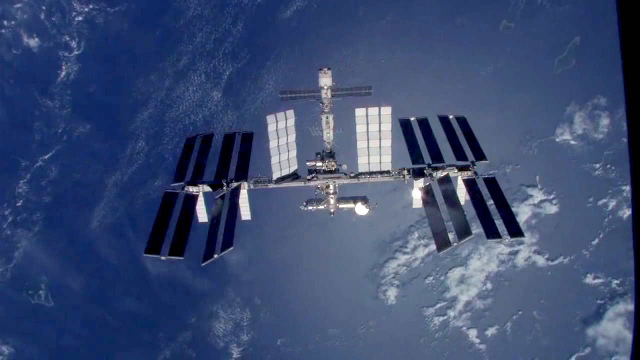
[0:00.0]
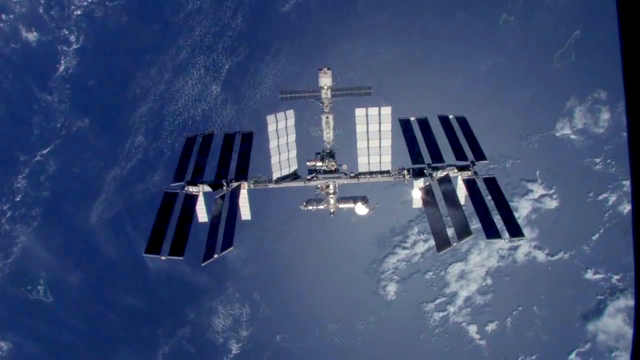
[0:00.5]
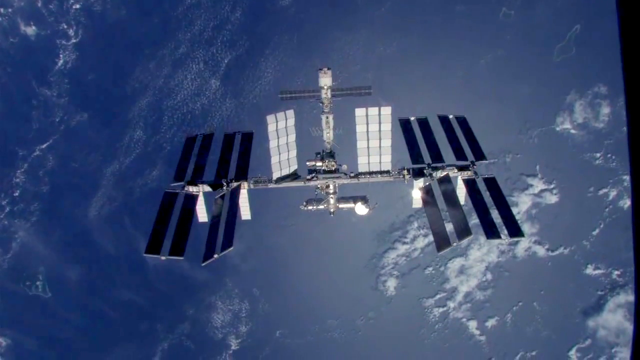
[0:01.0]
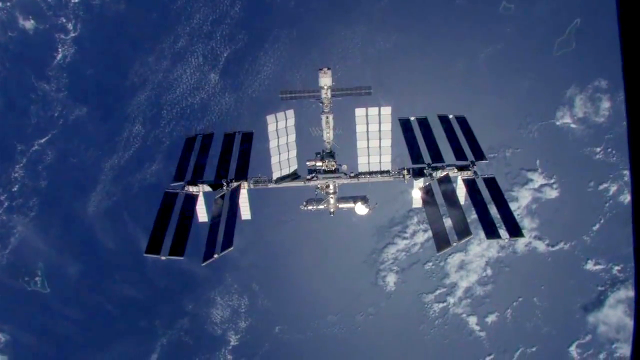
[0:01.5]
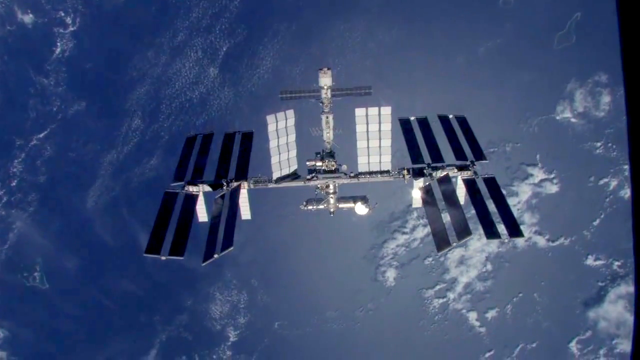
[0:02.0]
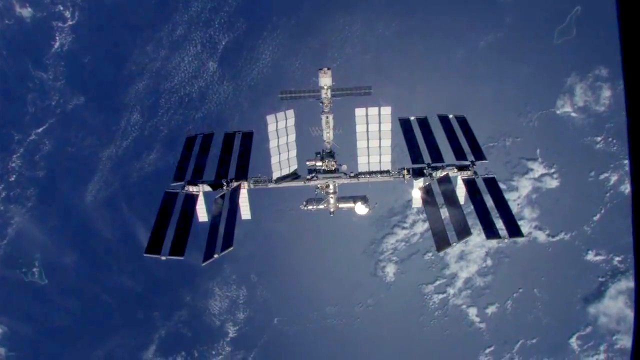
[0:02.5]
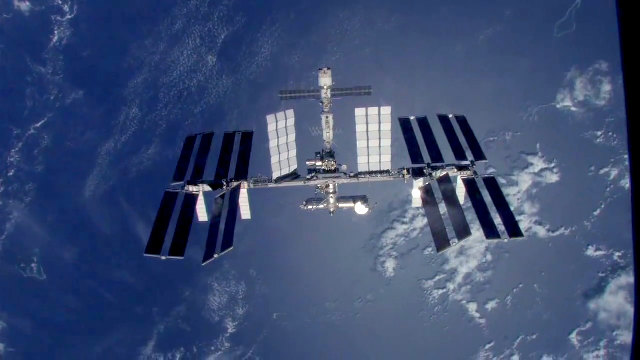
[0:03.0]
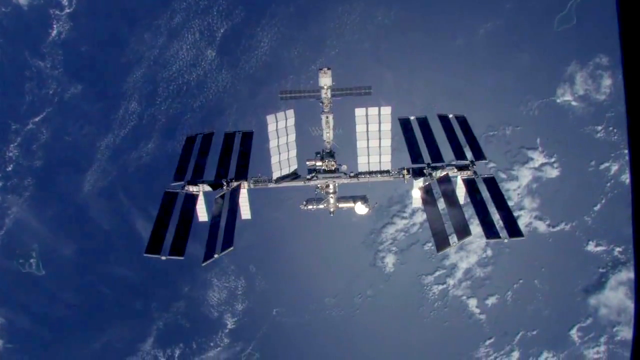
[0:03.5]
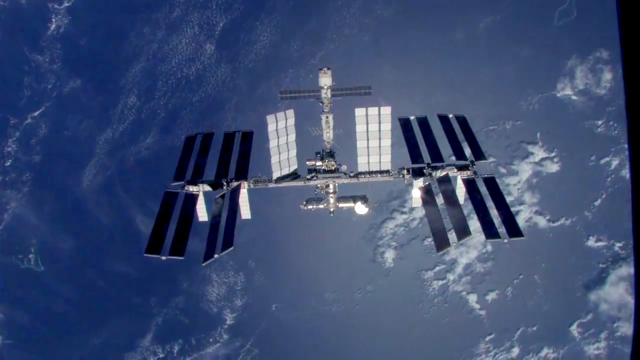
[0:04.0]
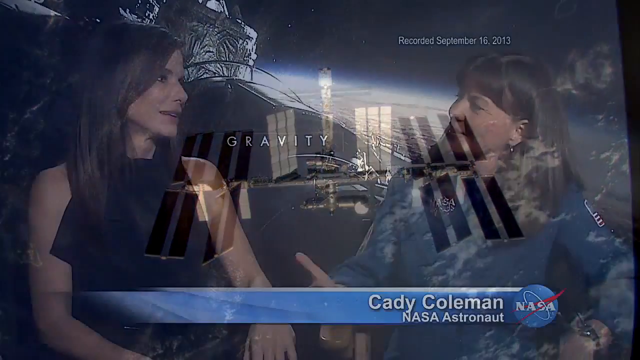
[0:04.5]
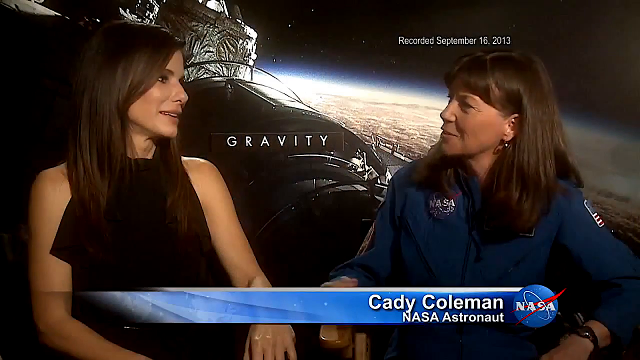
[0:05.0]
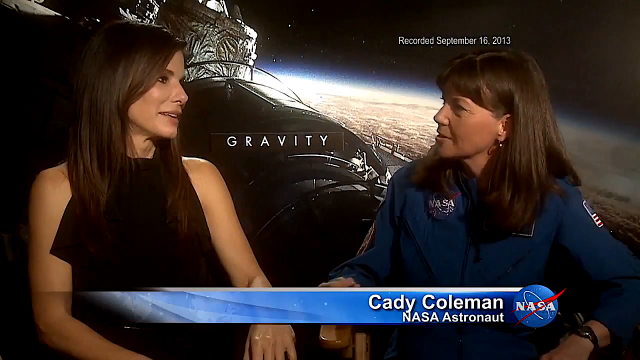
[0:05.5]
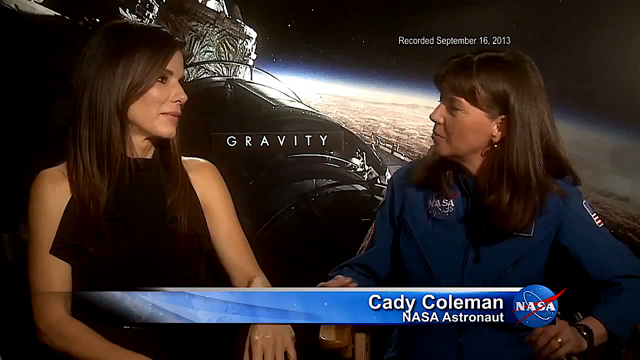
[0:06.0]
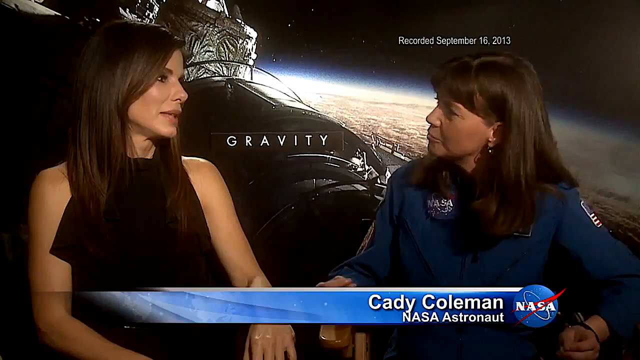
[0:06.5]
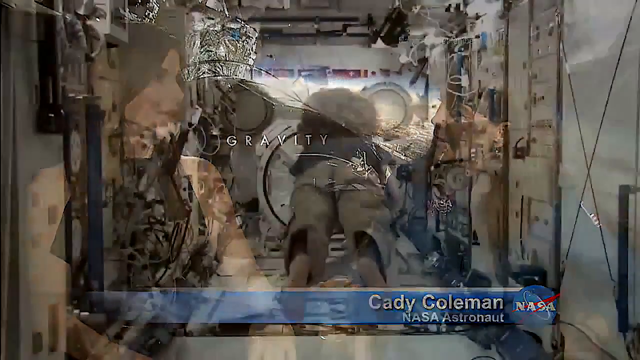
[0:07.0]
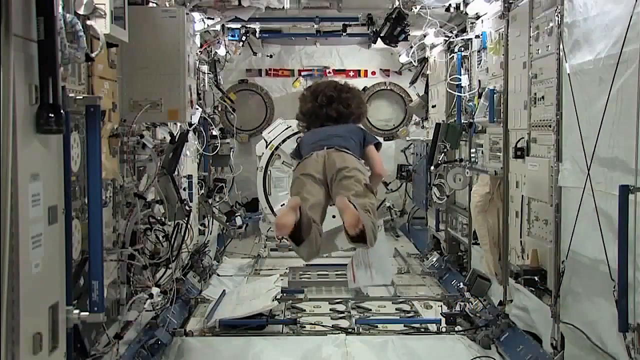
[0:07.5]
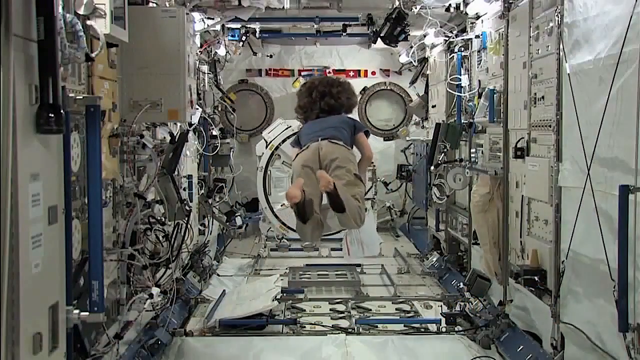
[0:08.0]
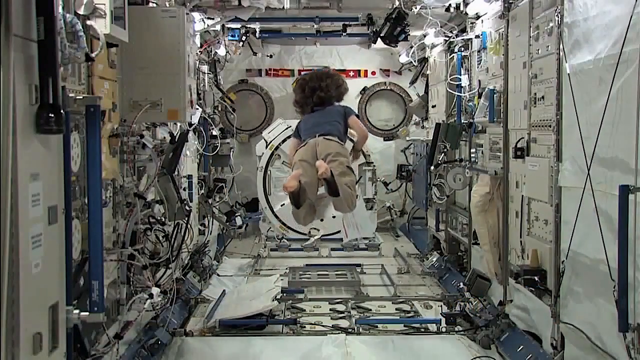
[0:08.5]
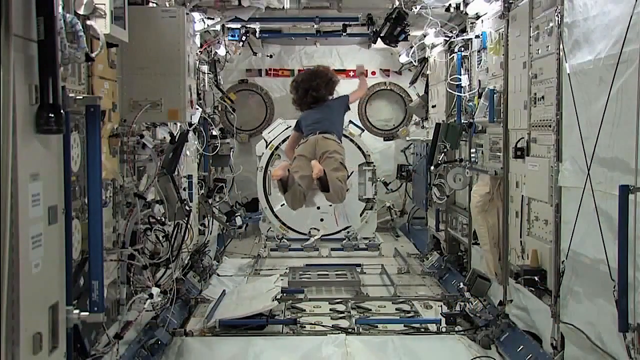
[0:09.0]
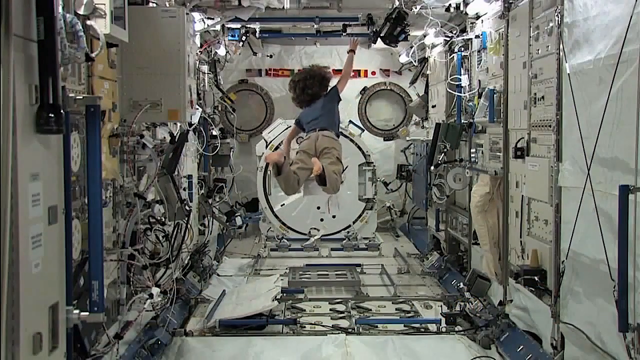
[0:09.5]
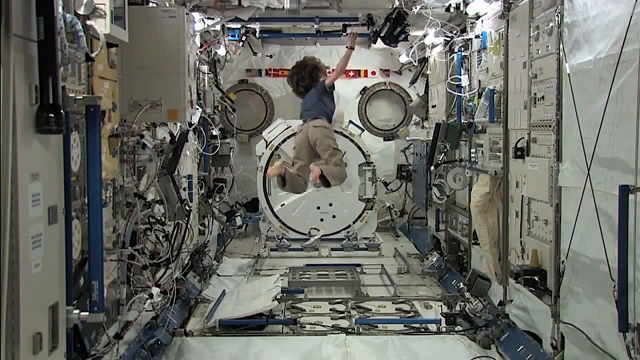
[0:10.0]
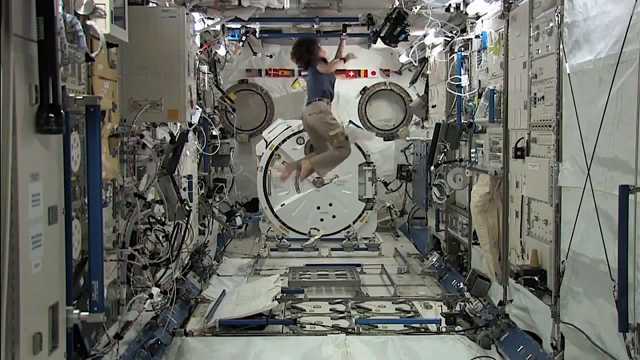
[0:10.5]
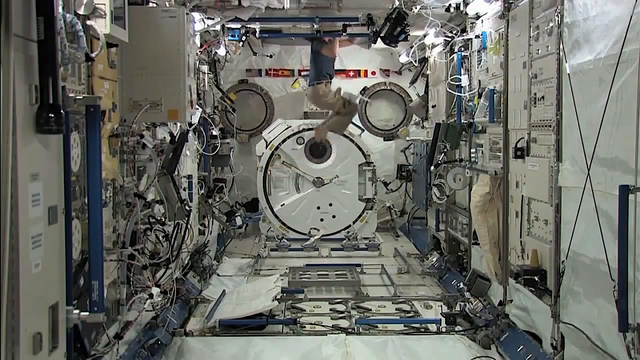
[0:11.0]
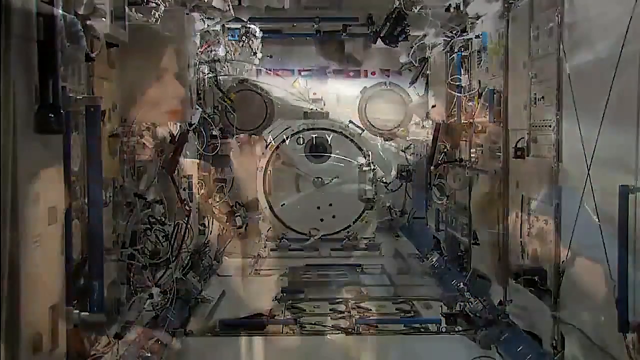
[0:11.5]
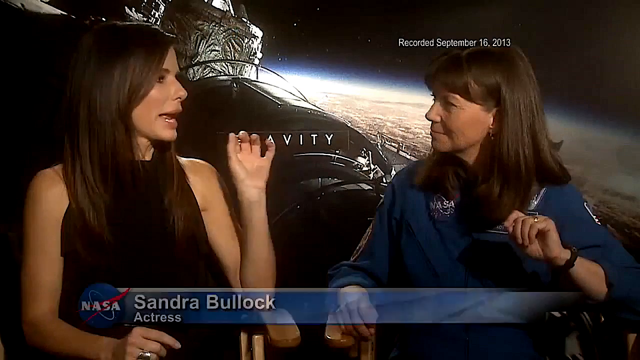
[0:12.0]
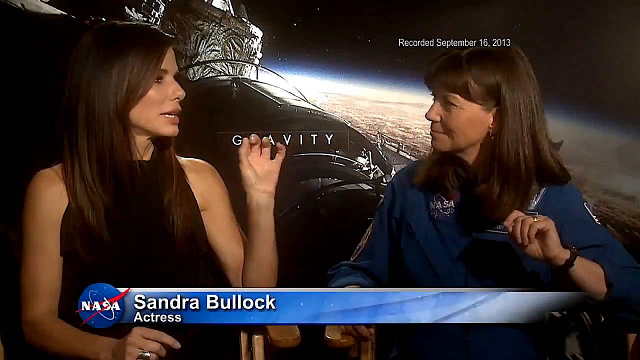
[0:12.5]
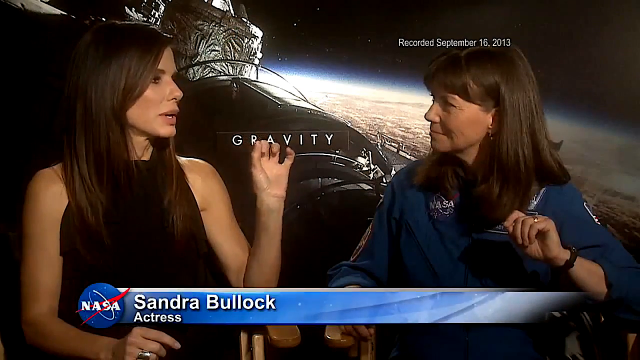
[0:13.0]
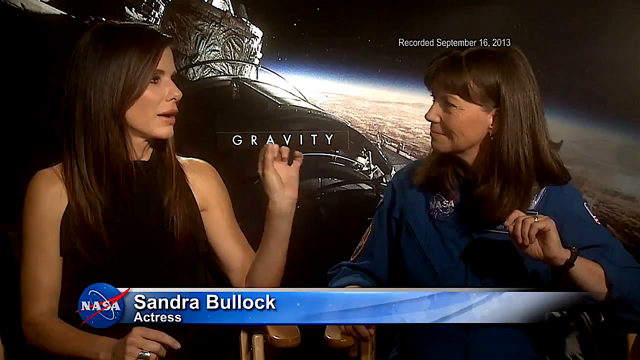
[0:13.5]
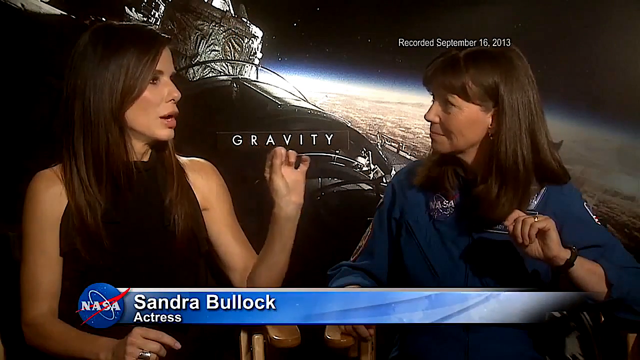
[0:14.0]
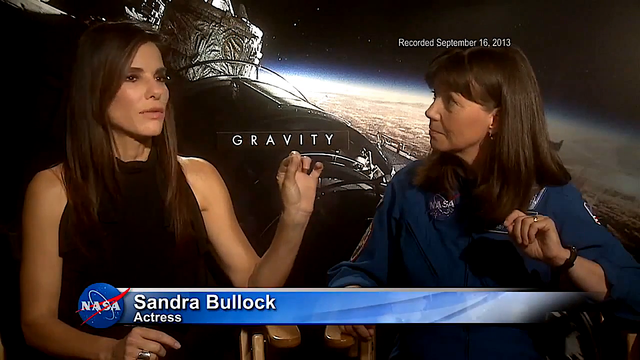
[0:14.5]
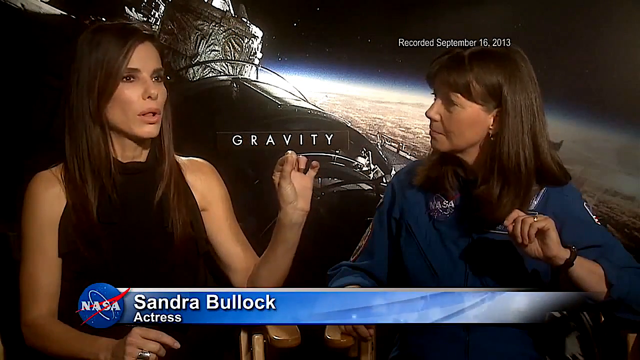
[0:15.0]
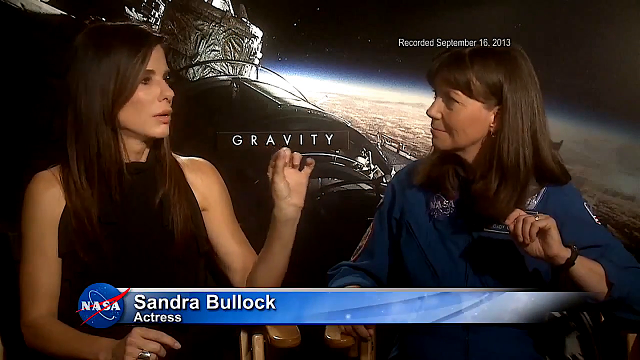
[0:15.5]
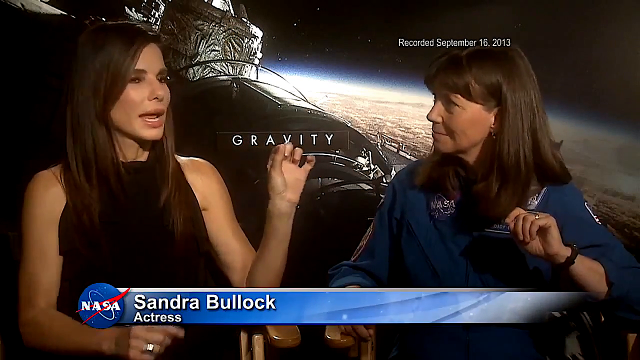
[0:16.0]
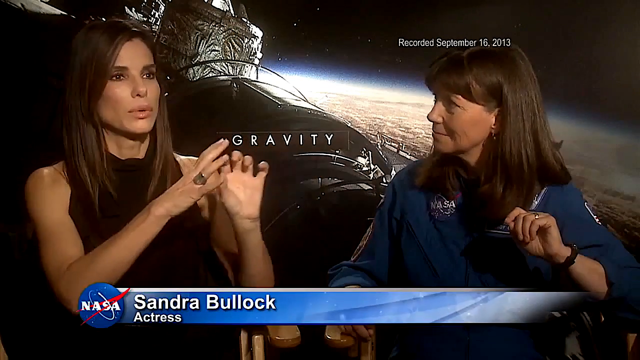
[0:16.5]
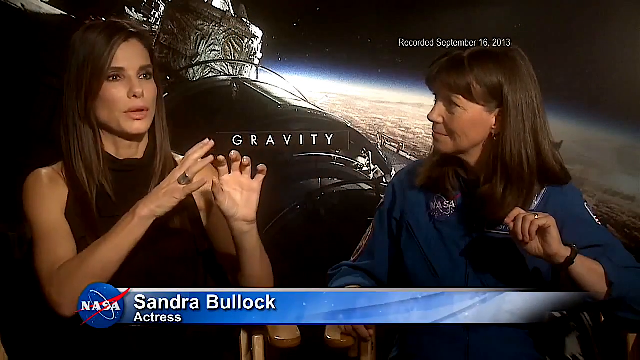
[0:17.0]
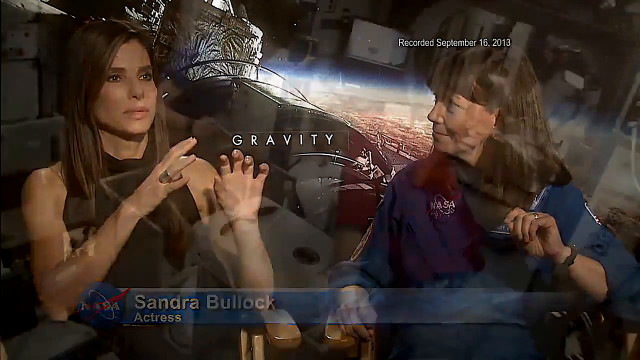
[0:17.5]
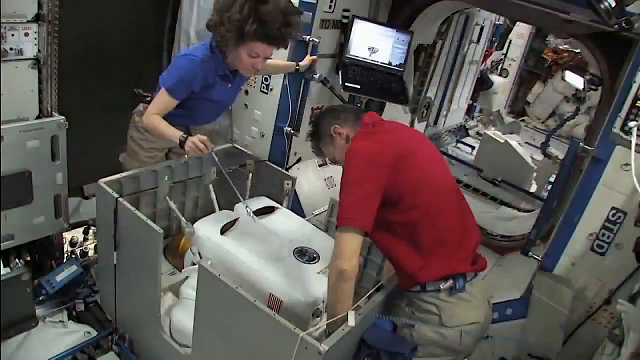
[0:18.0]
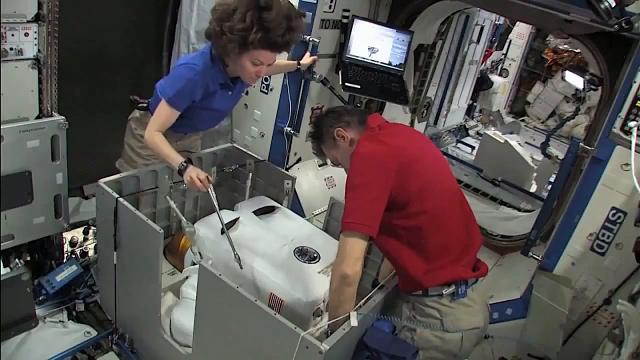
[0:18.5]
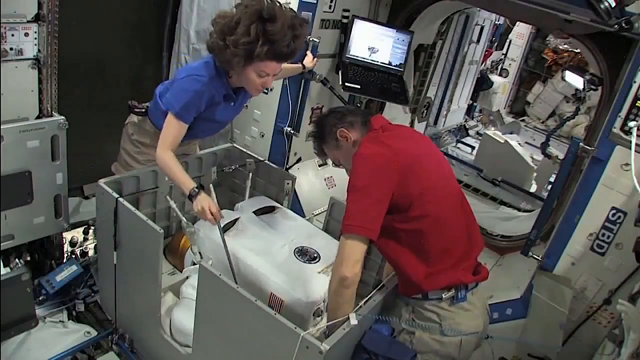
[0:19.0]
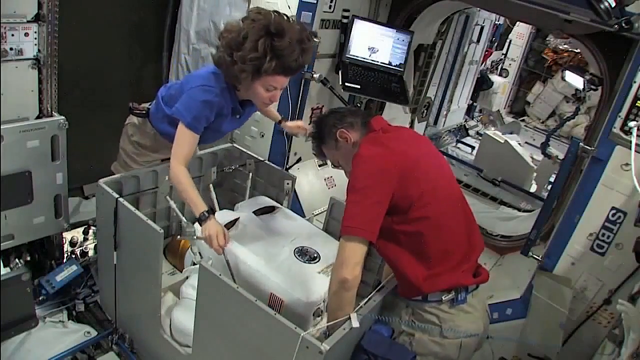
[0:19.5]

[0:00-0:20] A satellite floats above the Earth, which covers the screen in blue with a little white. The satellite is in the center. Off to its left there are four solar panels up and down and four on the bottom side, and the same on the right side. In the center a small piece comes off the bottom, a bit goes left, then right, a piece goes up, and there is something like a T at the top, which also has solar panels to its left and right. The solar panels are black on the outside and a little silver on the inside. The satellite moves slowly down in the image. The video then cuts to Sandra Bullock sitting on the left side, with brown hair to her shoulders and a black sleeveless dress. On the right side is an astronaut with brown hair just past her shoulders; text at the bottom reads "Katie Coleman" and "NASA astronaut," with a NASA emblem next to her name on the right side. Between them it says "gravity," with a bit of a spaceship, the Earth and space. Above the astronaut's head it says "recorded September 16, 2013." The astronaut looks at Bullock, talking to her, while Bullock looks to the right but kind of past her head. Next, a girl floats in a space shuttle with her feet toward the camera, floating into it; she reaches up with her right hand, grabs something, and pulls herself up through a hole. The video cuts back to the interview, and on the left side text reads "Sandra Bullock, actress." Bullock talks with her left hand out in front of her, between her and the woman, while the other woman has one of her hands up to about shoulder level. Bullock's palms face the camera and she moves them back and forth as she talks. The other woman nods. Bullock then looks off forward a little, brings her hands up and kind of spaces them out. Next, two astronauts, one on the left and one on the right, work on a little cargo in the center. The one on the left is a woman whose hair floats up in the air; the other is a man with short hair.